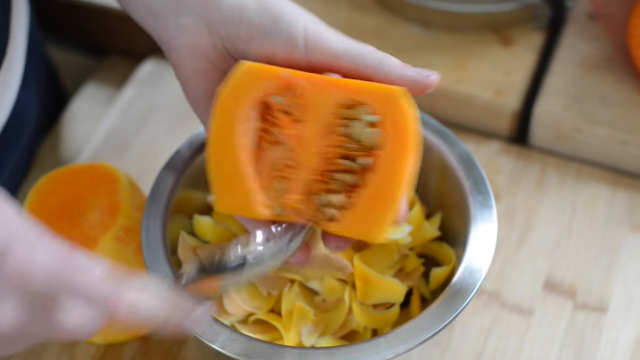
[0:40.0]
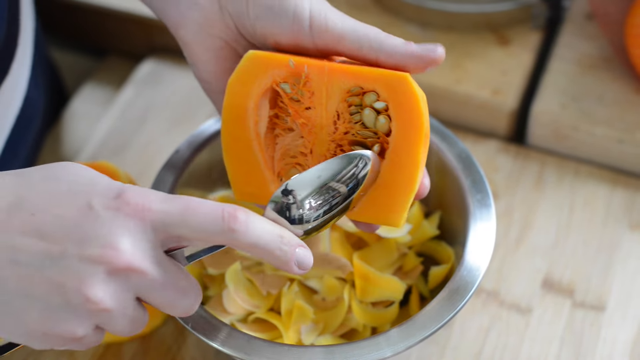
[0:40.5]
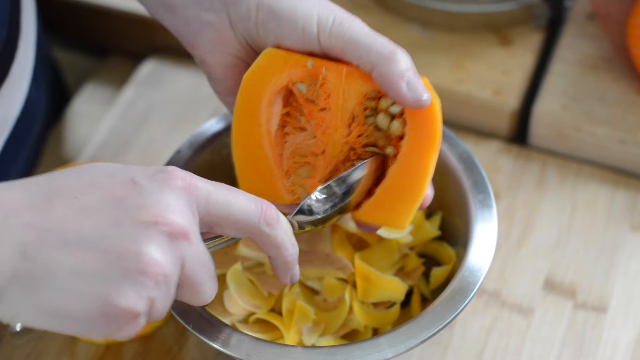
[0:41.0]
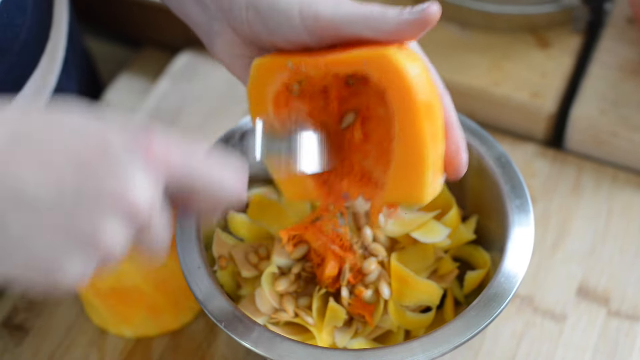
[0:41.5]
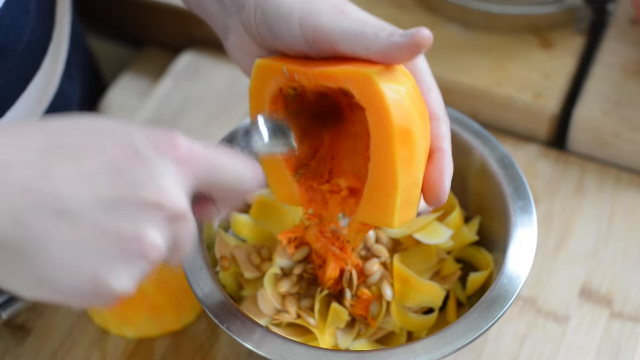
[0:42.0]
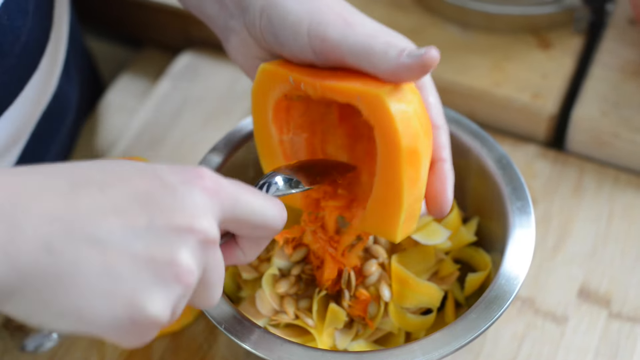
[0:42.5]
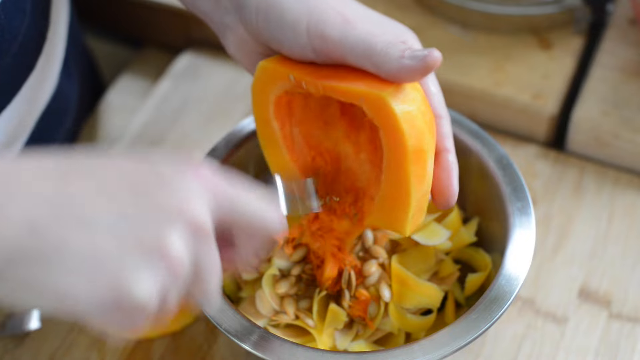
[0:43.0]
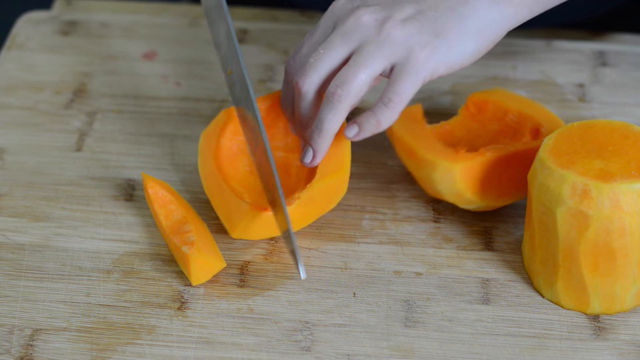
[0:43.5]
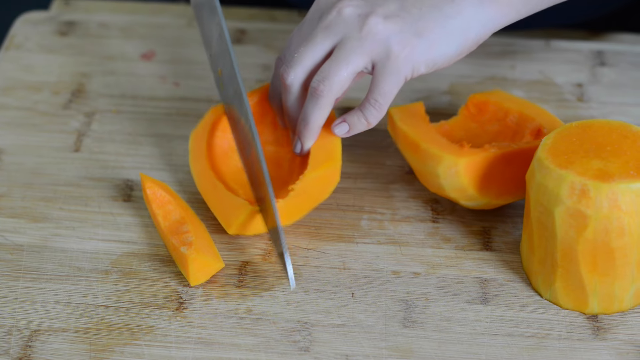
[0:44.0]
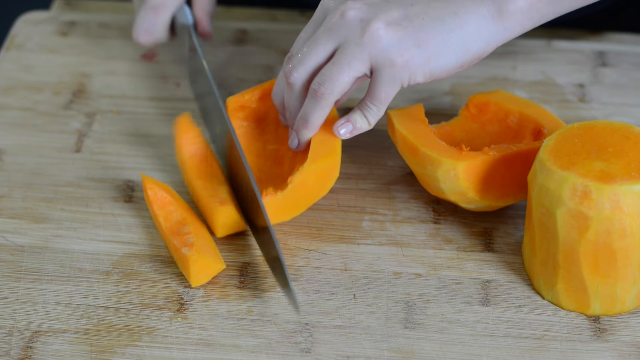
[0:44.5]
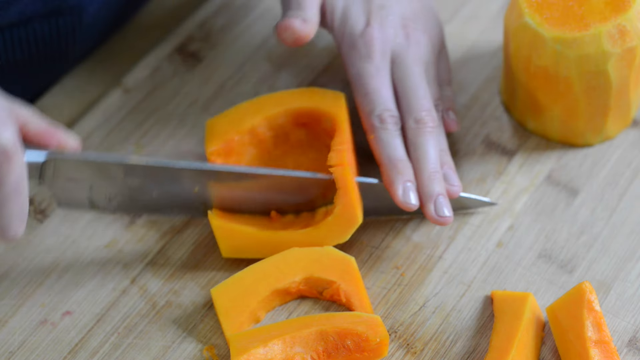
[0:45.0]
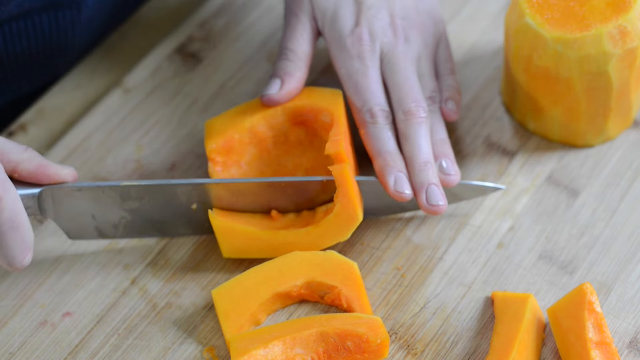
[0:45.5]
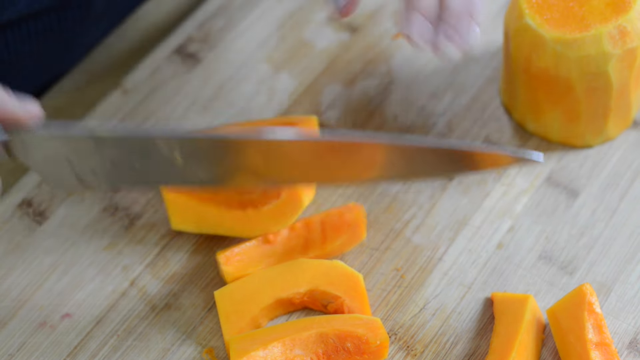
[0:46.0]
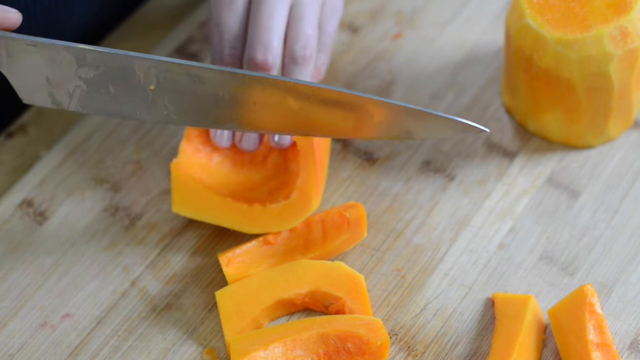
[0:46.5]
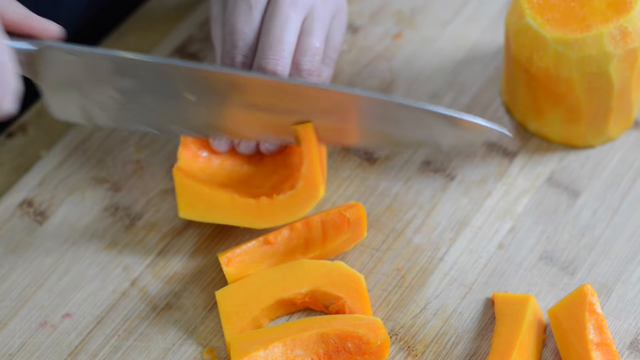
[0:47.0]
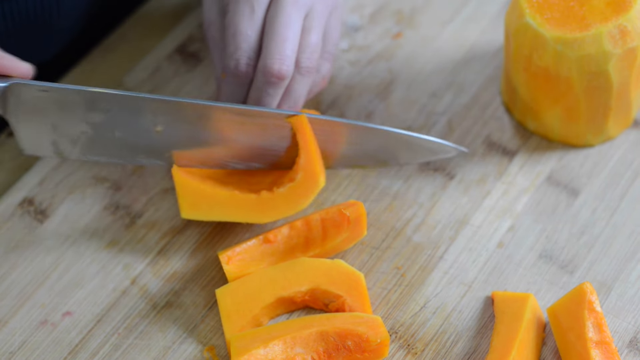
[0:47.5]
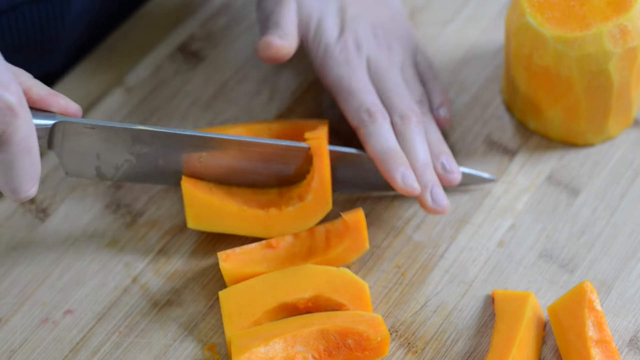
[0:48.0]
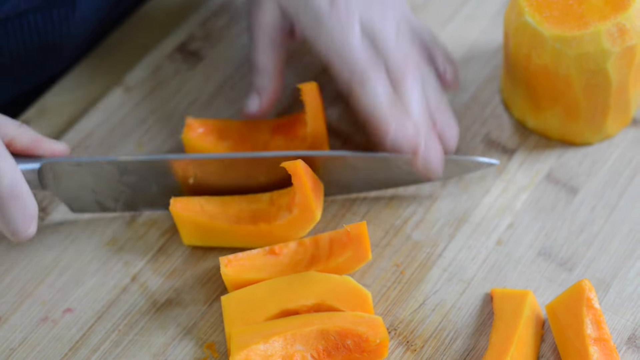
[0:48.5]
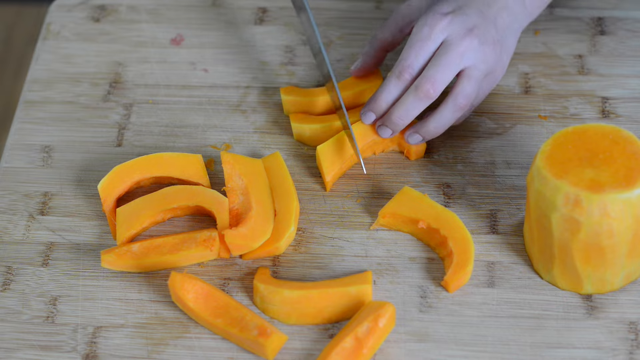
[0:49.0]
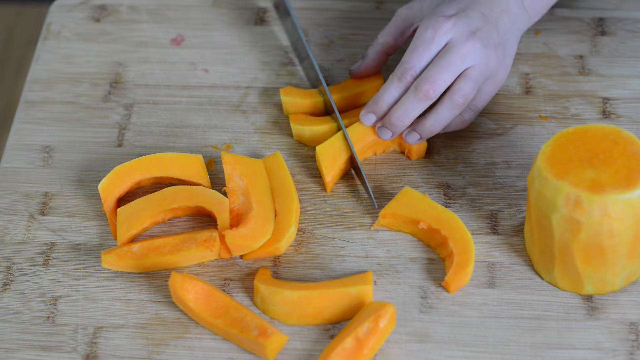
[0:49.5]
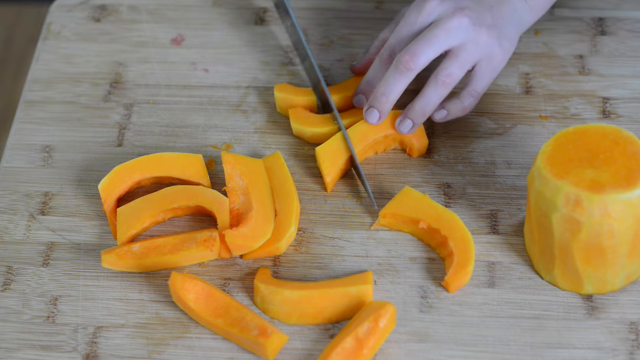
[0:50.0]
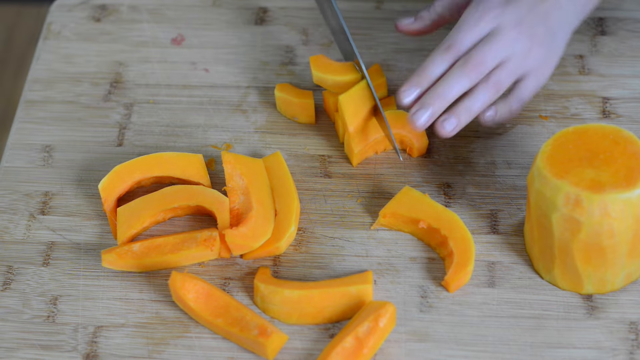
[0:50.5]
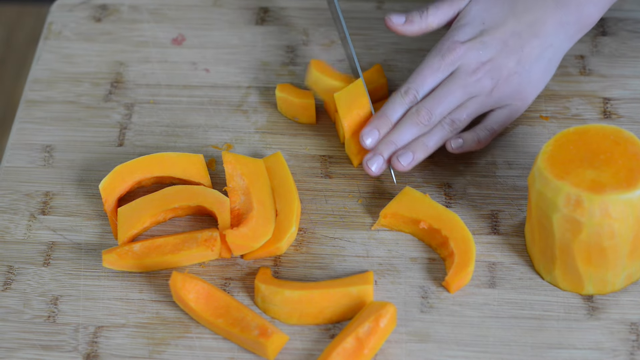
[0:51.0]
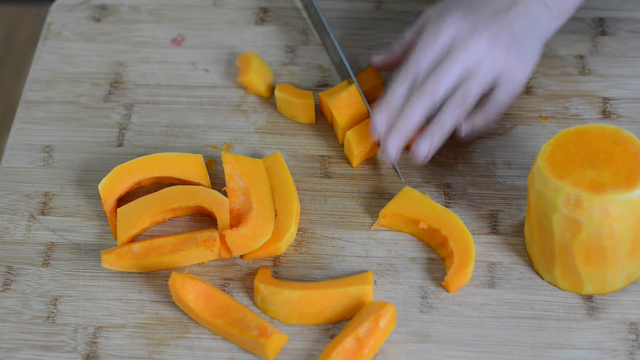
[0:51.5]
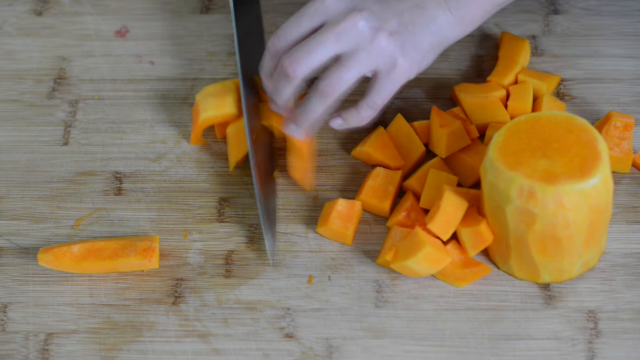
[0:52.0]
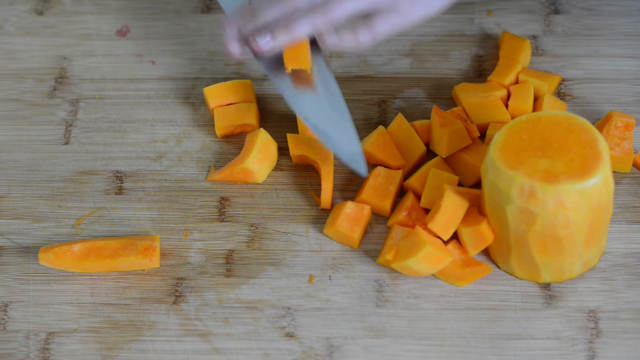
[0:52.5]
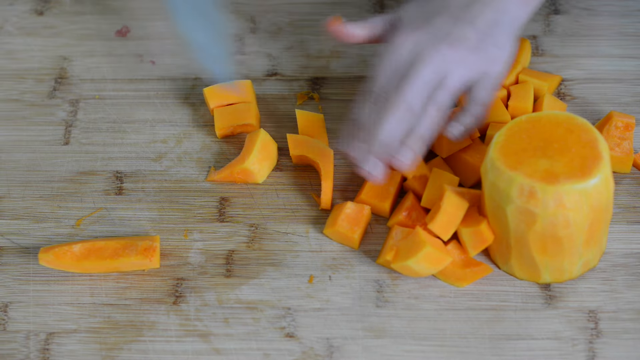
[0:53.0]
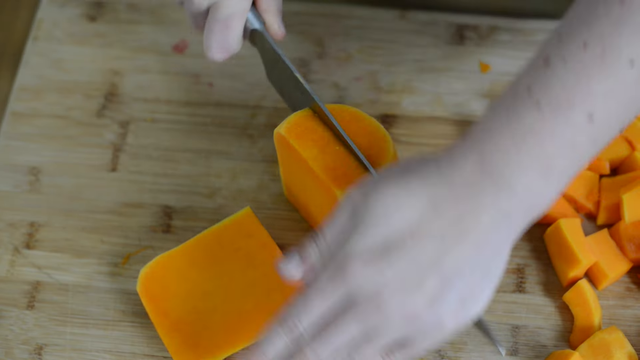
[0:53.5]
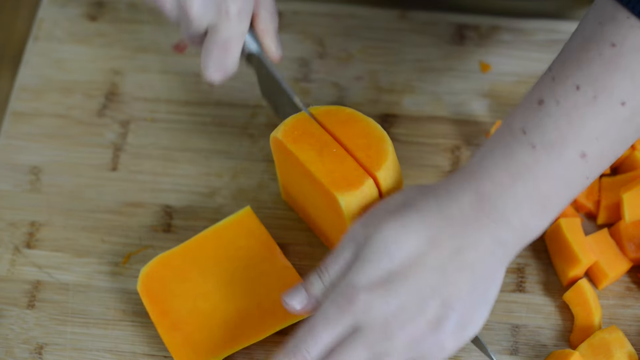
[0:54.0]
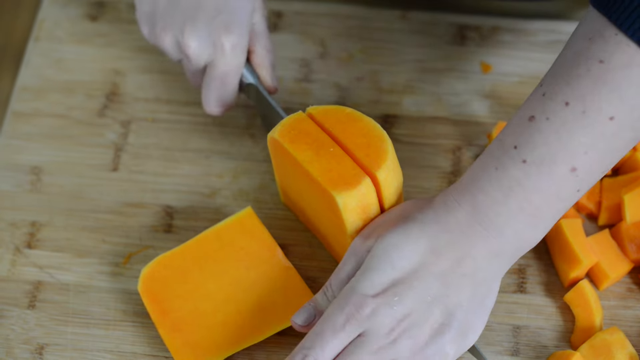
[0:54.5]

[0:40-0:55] In what looks like a cooking tutorial, a person scrapes squash seeds into a silver bowl with a silver spoon, along with some shavings, then cuts the squash into strips and cuts the strips into smaller, roughly square pieces of different sizes. The cutting is done with a very large knife with a silver blade on a light-toned wood cutting board, and the cutting is neat. In a very quick shot, one article of the person's clothing appears to be blue, and in one camera angle the person, who is Caucasian, appears to have freckles on their arm. The same actions repeat over and over. The video has an amateur, YouTube-like look but fairly good image quality.